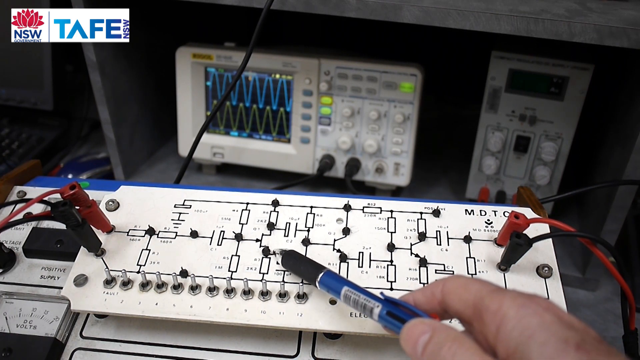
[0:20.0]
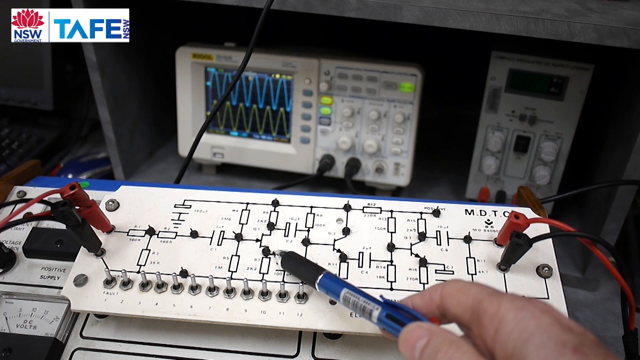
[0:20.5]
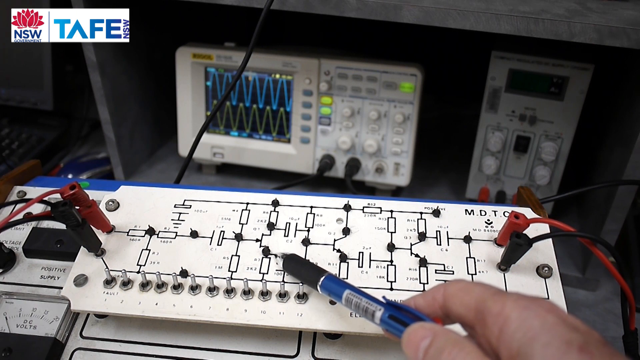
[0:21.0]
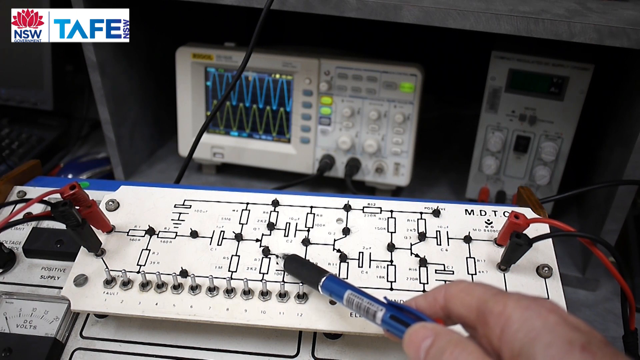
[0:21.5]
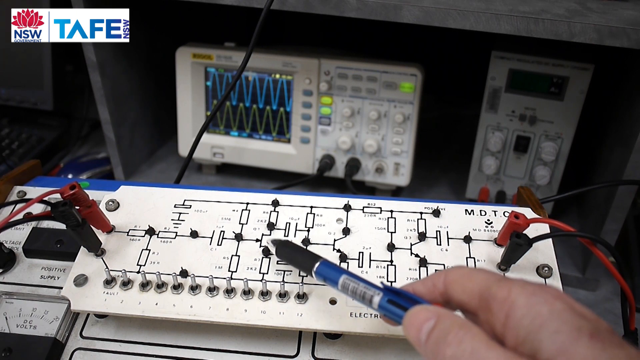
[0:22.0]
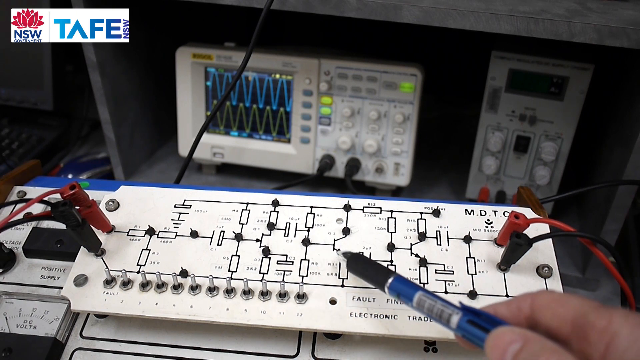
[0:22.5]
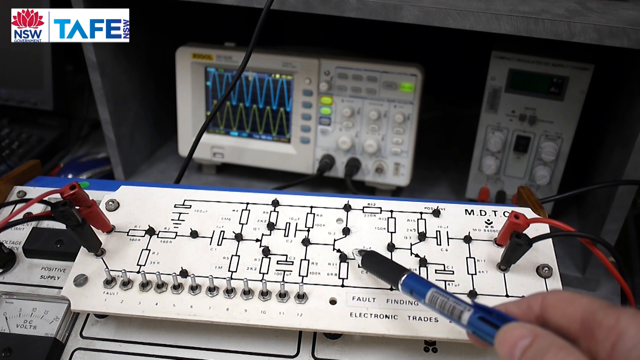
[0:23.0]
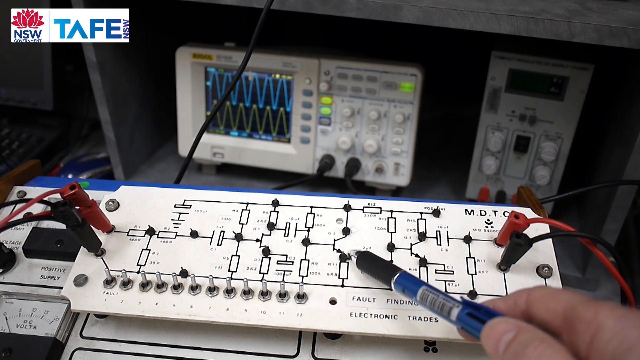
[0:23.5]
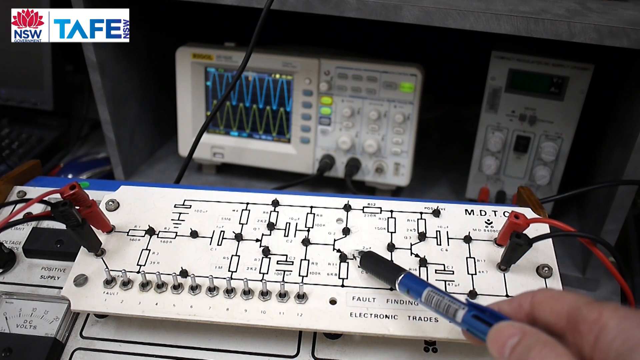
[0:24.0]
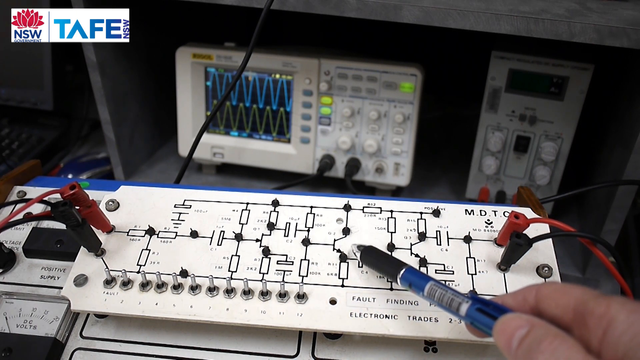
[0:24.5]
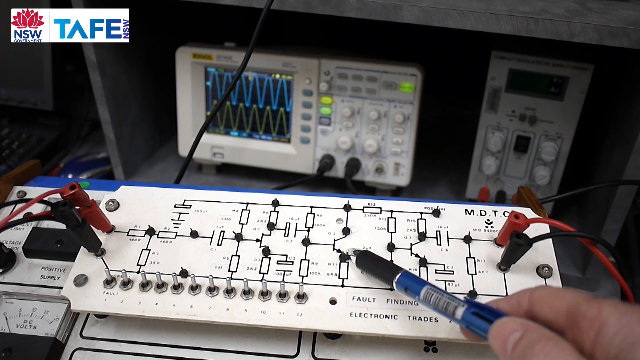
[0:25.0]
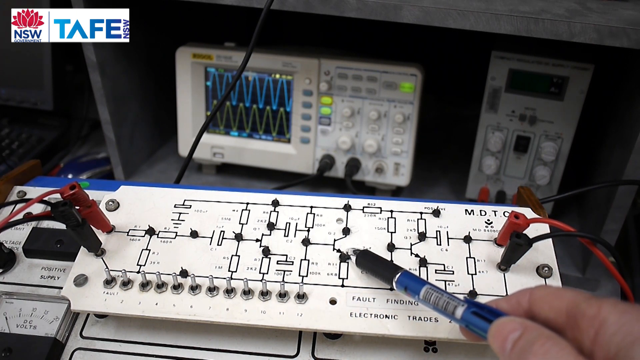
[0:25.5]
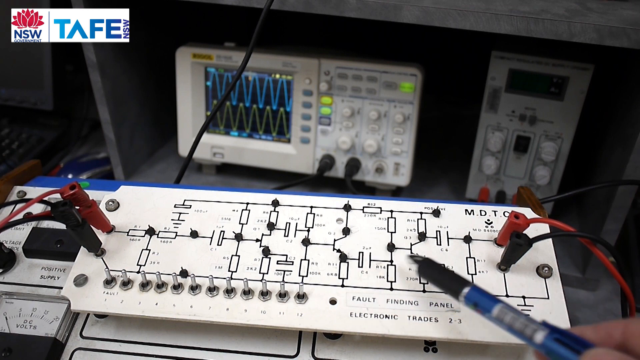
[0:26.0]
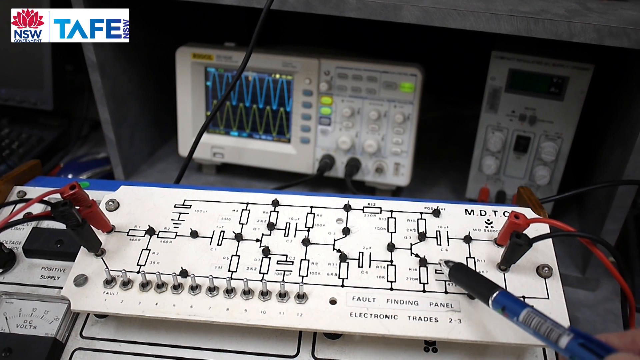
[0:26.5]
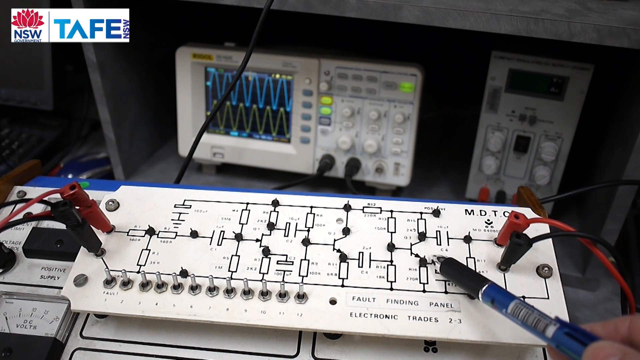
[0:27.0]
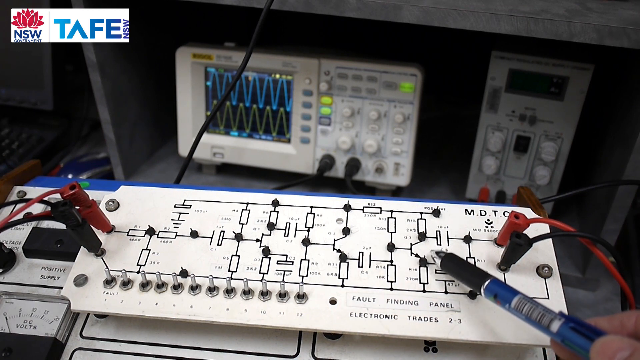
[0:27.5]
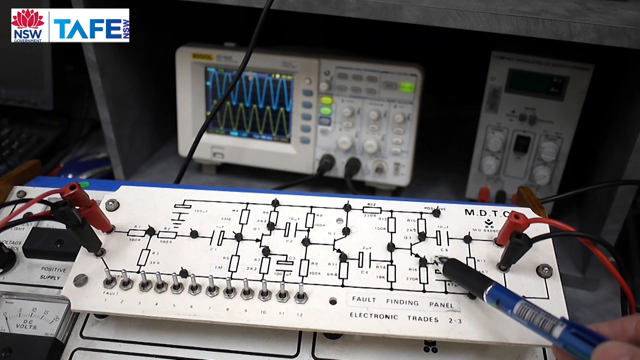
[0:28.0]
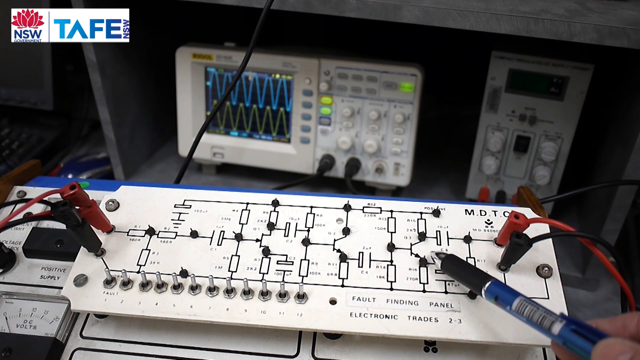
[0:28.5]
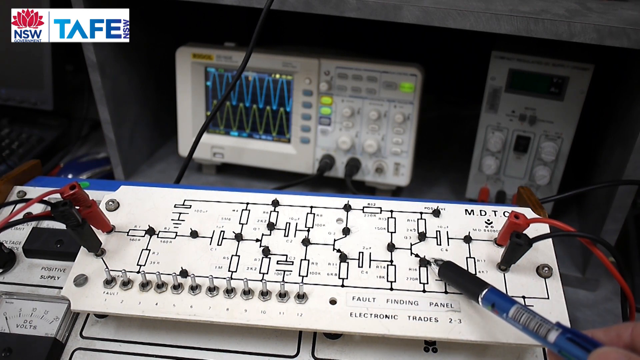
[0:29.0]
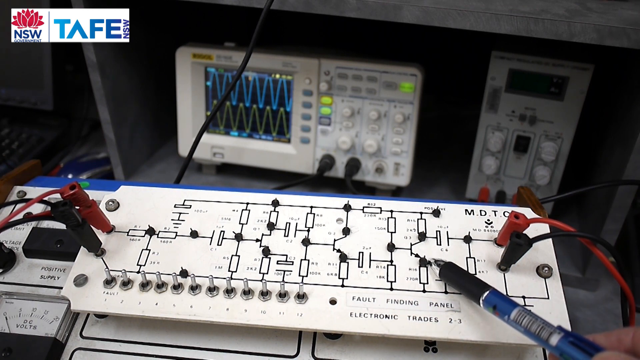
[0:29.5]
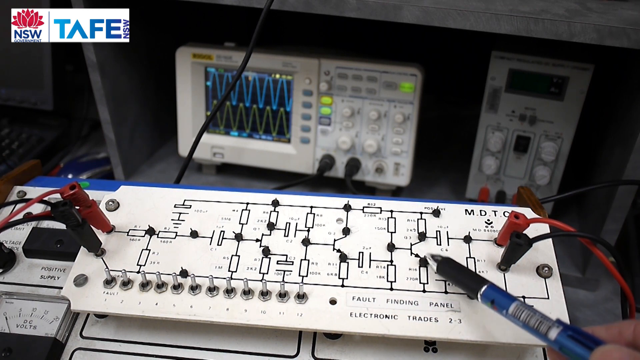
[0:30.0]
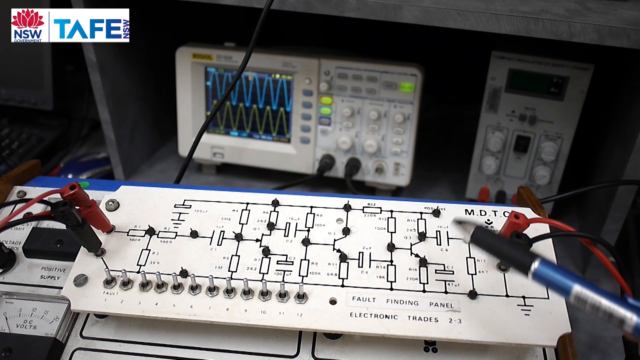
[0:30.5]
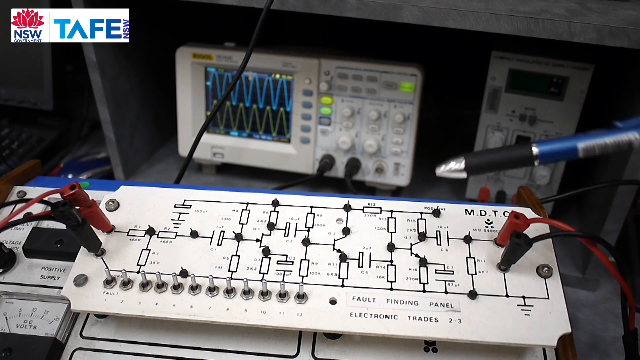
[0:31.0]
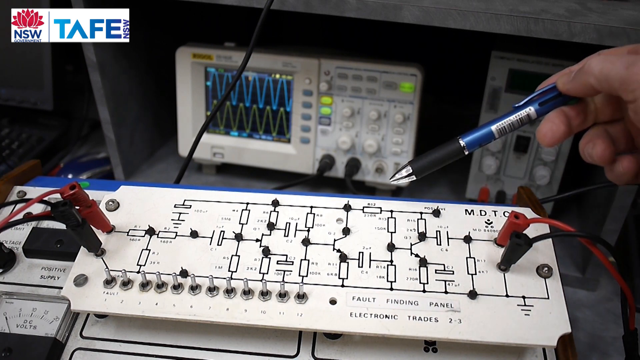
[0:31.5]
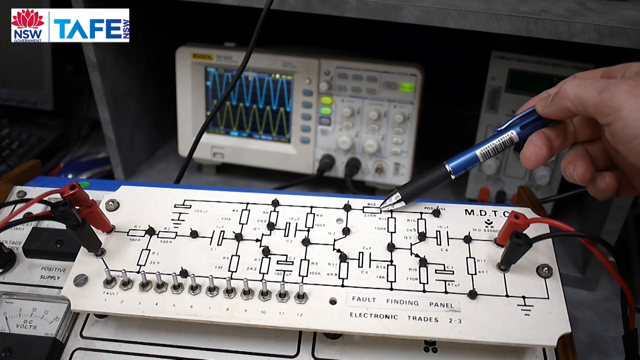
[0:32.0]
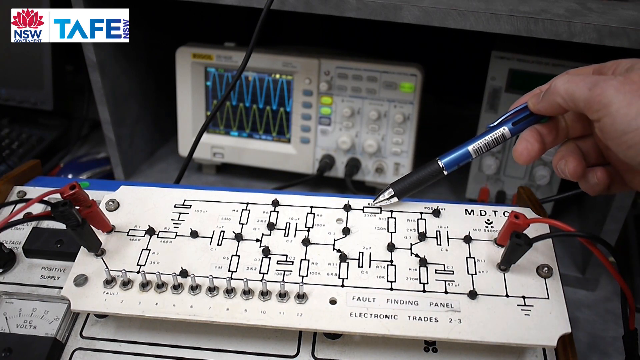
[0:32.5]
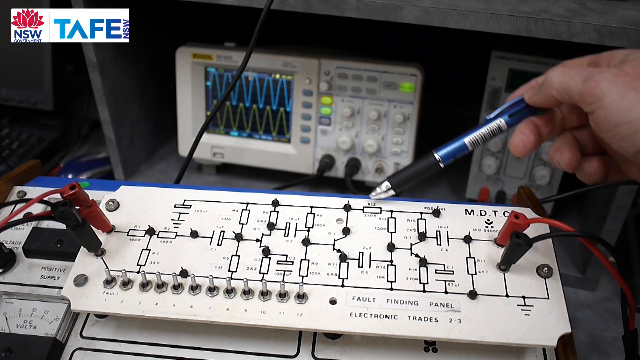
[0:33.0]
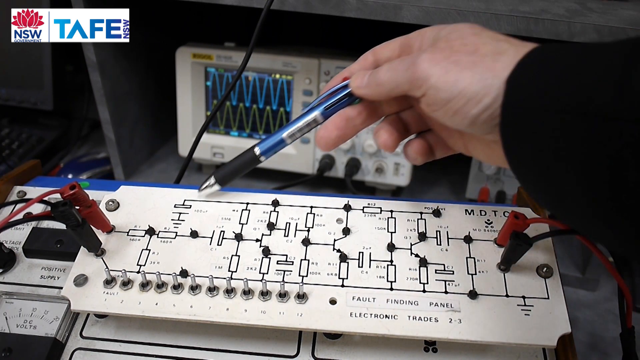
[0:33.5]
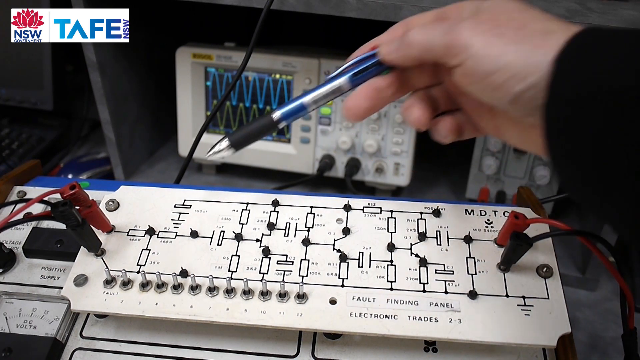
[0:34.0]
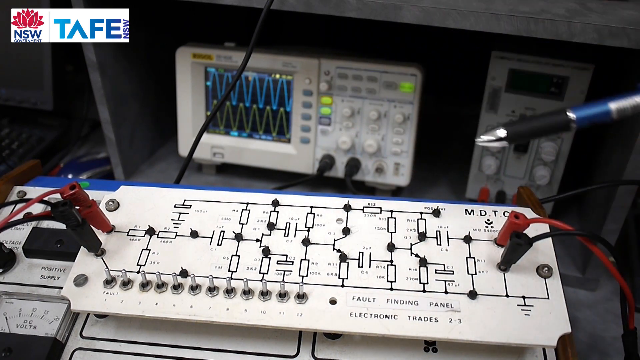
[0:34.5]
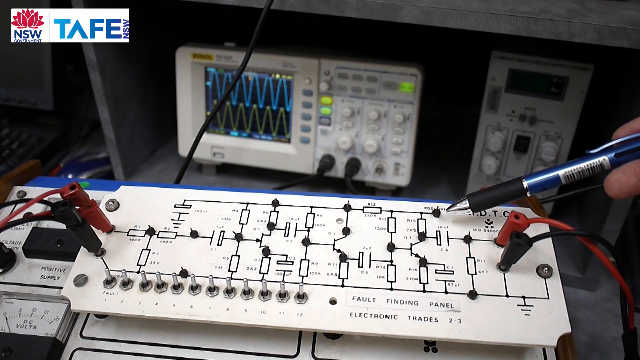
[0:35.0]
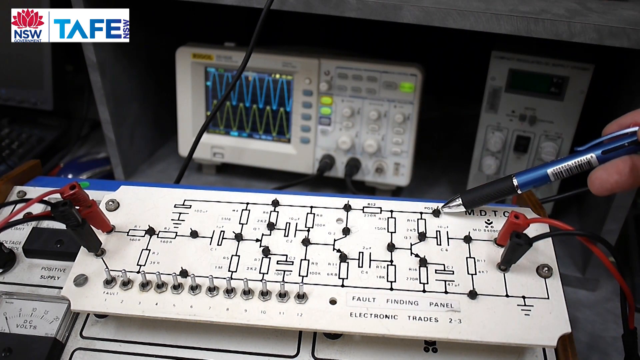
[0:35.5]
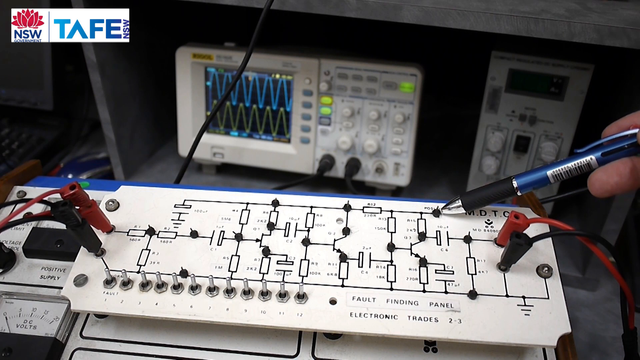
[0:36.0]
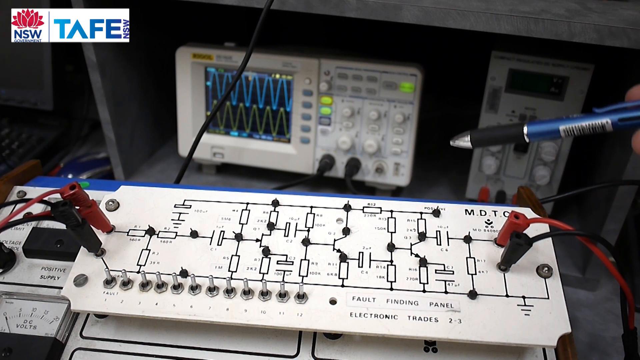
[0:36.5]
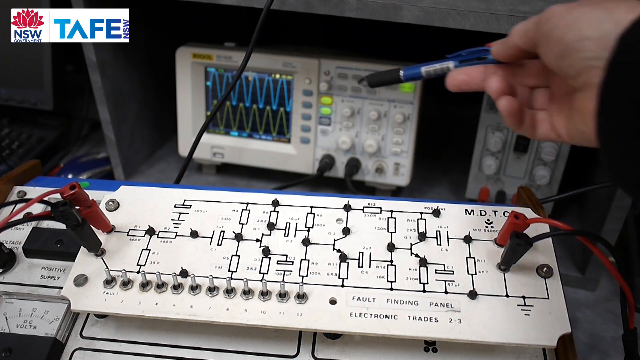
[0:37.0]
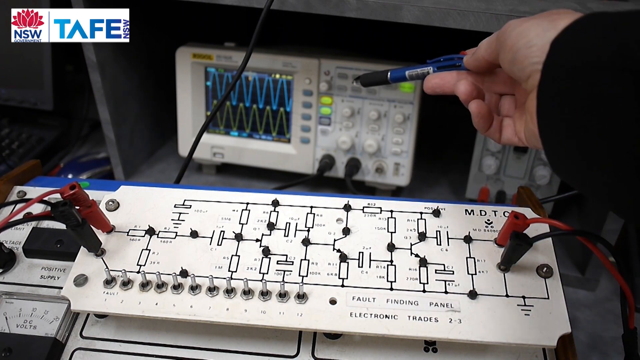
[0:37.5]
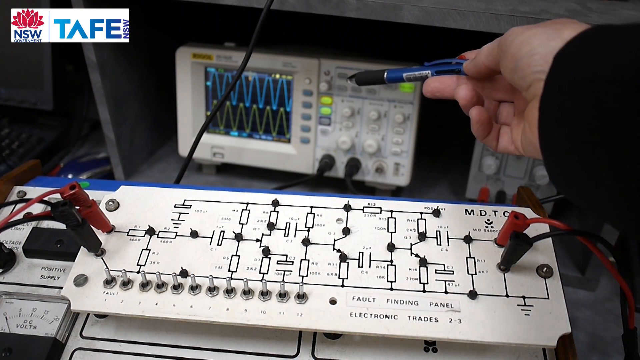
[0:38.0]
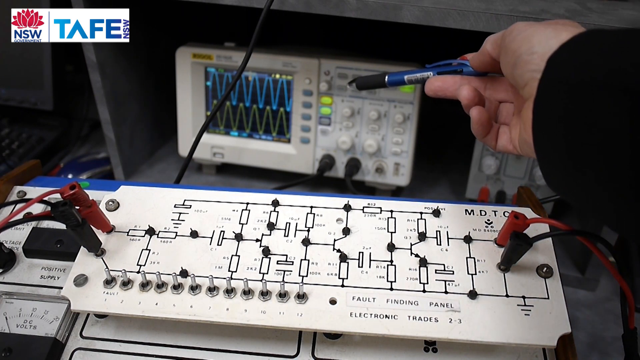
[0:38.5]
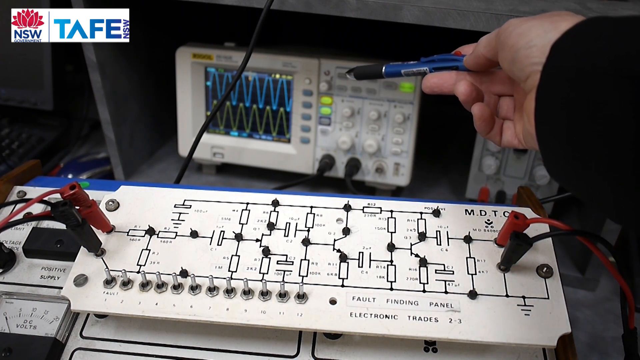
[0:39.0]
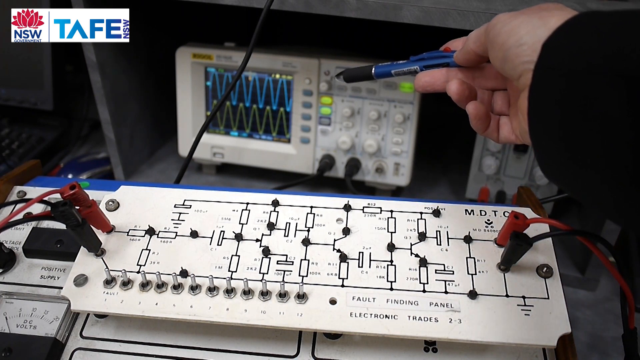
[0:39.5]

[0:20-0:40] A white device has lots of little input holes, and along its bottom are at least 12 little metal switches that click up and down, on or off. This white panel is on a nook that looks like a little desk case, and in the desk case is another white box, upright and rectangular. On its flat screen is a row of blue wavy lines with yellow wavy lines below, and the box has lots of buttons and knobs. Next to it is an upright box with four big white knobs in the center. A person's hand holds a blue pen with a black grip near the point. The person touches the pen point to one black dot on the diagram of the biggest panel, moves to another dot, then up to a dot toward the top, and then points the pen at the next machine toward the back. The person is wearing a long-sleeve black shirt.